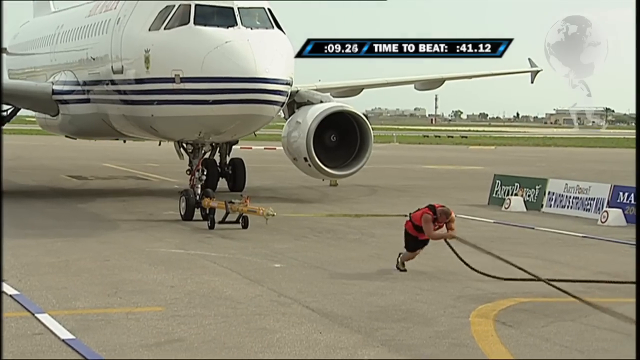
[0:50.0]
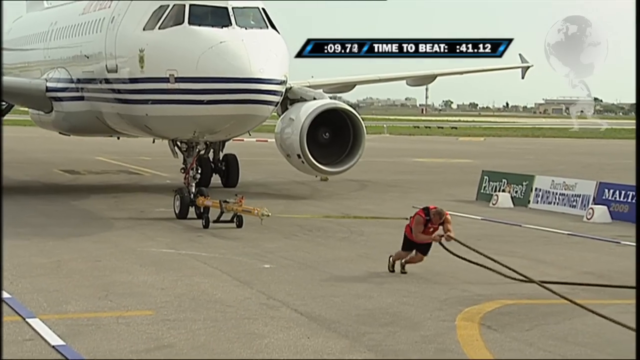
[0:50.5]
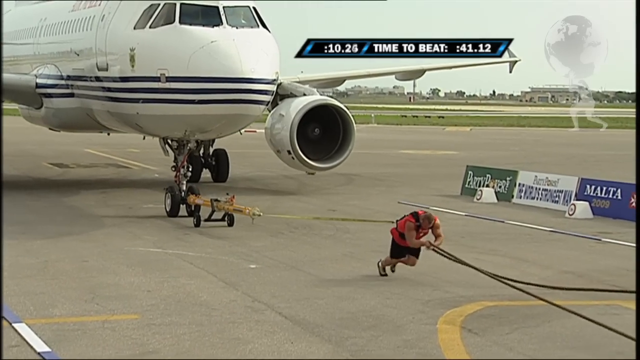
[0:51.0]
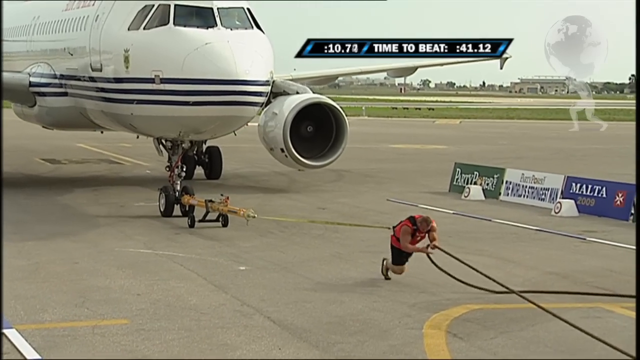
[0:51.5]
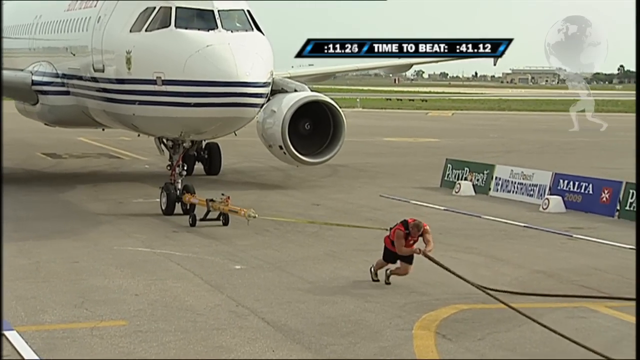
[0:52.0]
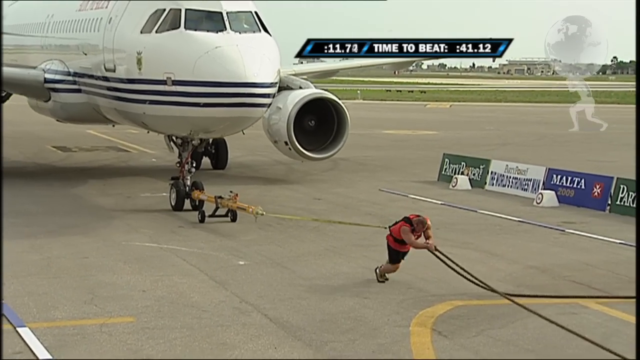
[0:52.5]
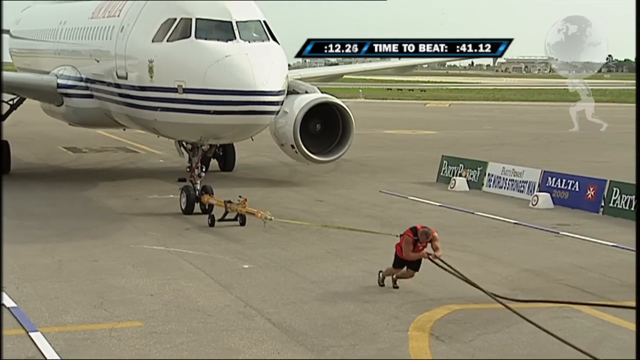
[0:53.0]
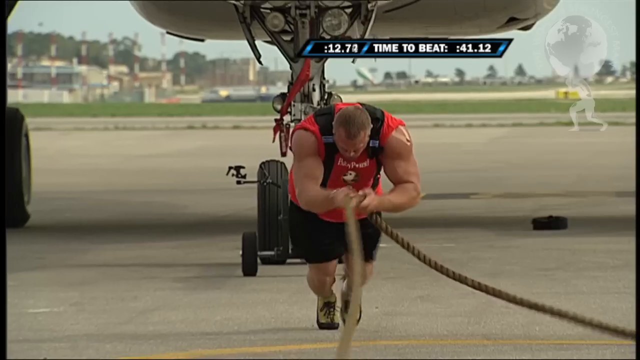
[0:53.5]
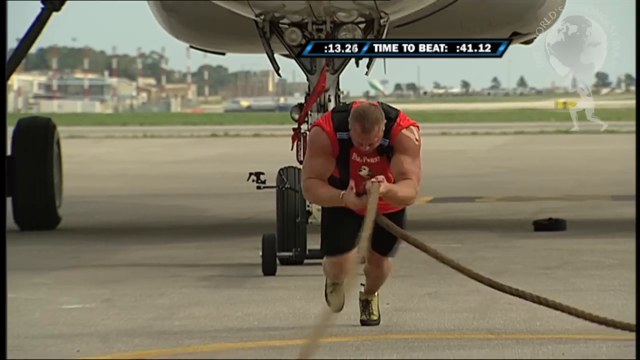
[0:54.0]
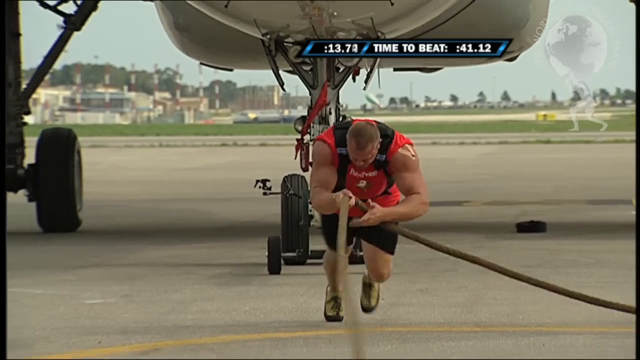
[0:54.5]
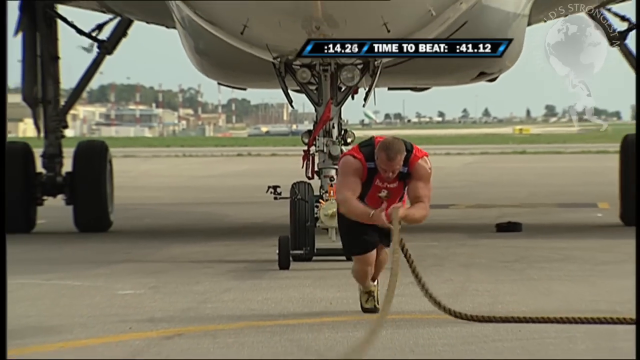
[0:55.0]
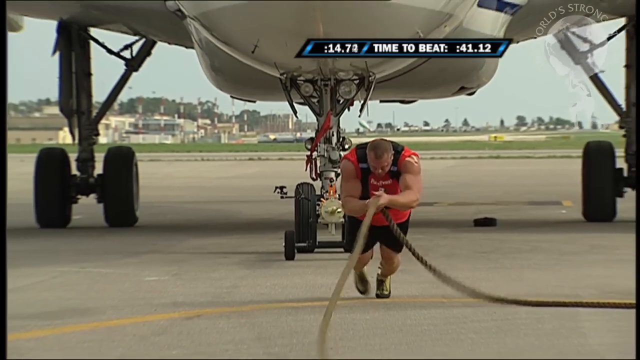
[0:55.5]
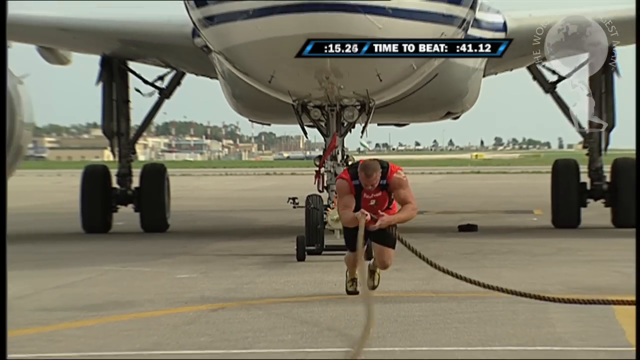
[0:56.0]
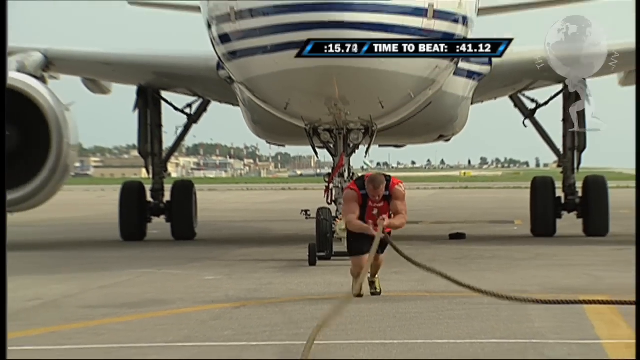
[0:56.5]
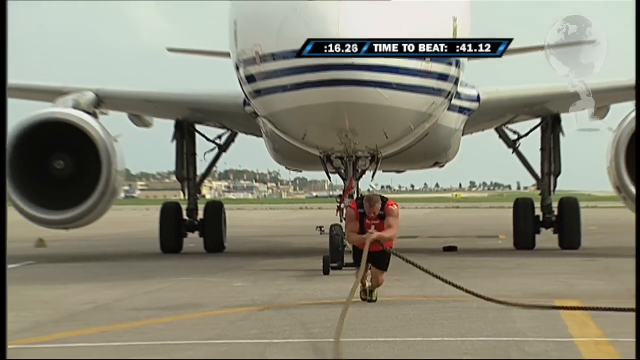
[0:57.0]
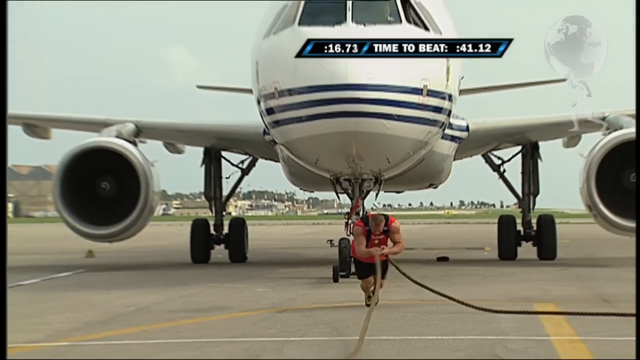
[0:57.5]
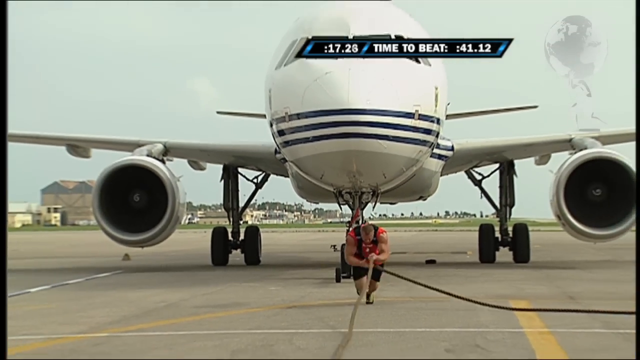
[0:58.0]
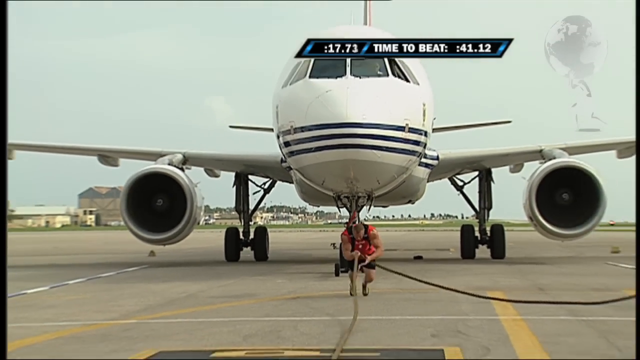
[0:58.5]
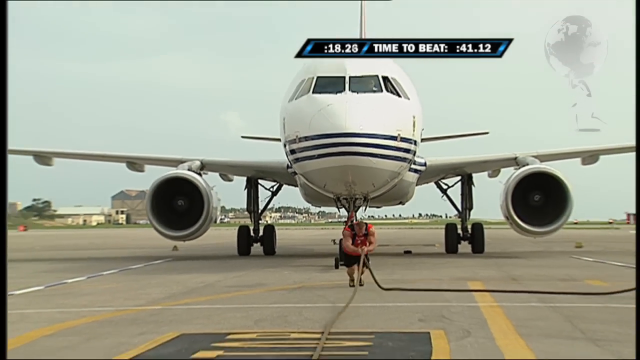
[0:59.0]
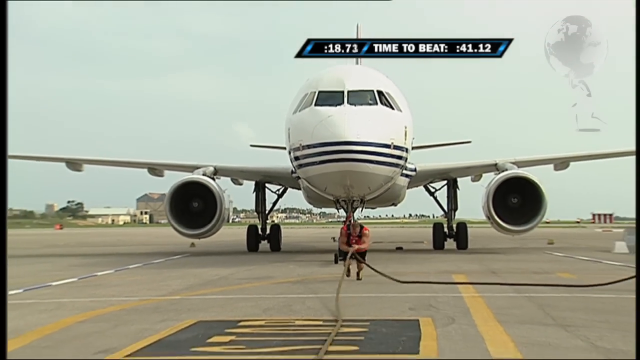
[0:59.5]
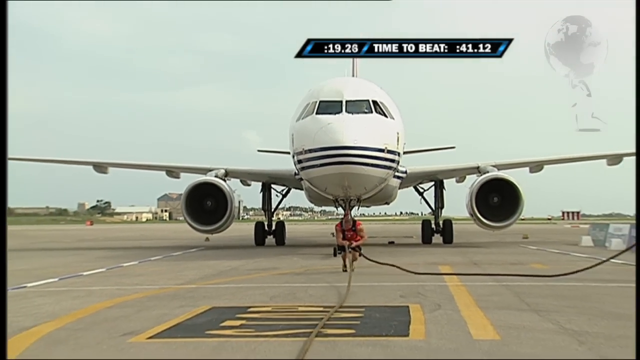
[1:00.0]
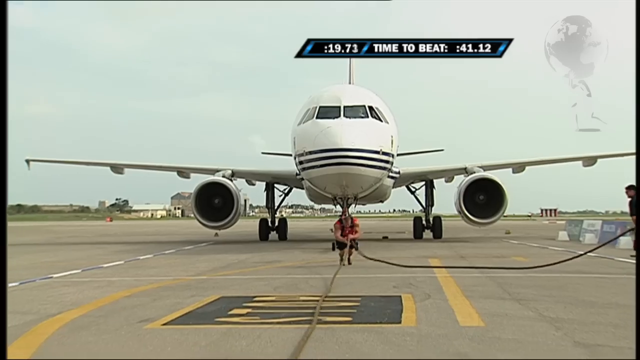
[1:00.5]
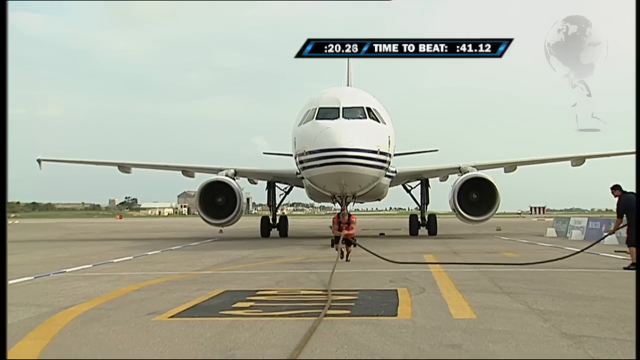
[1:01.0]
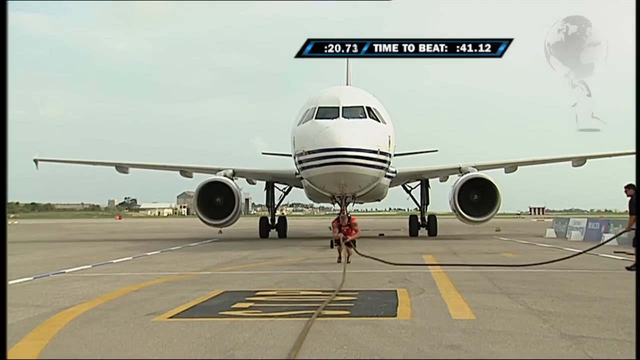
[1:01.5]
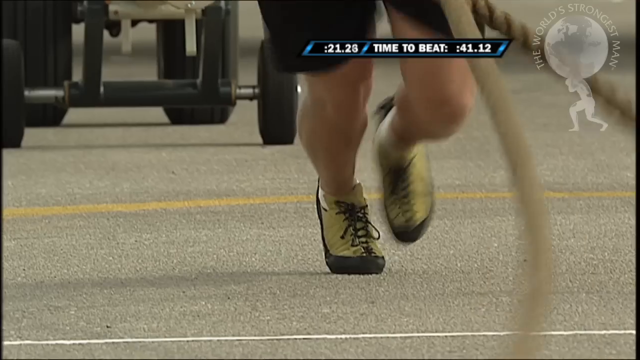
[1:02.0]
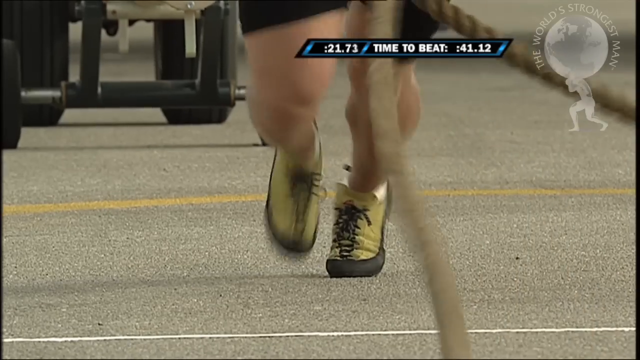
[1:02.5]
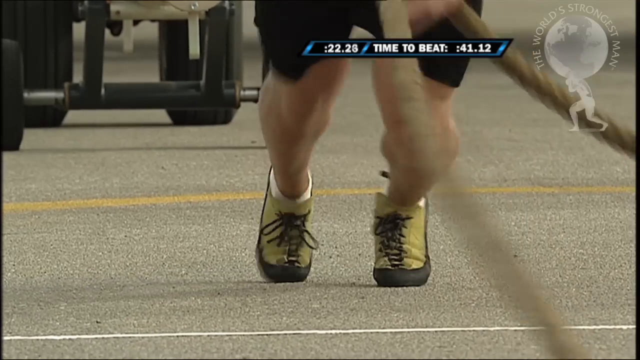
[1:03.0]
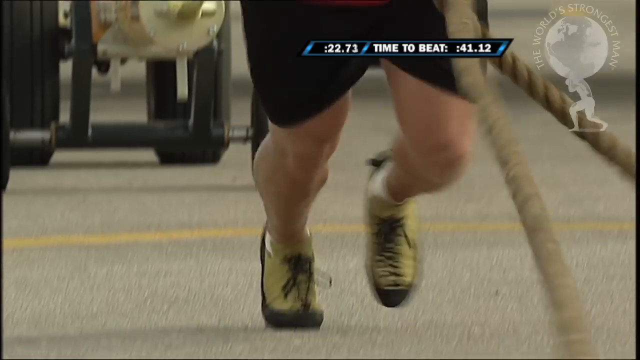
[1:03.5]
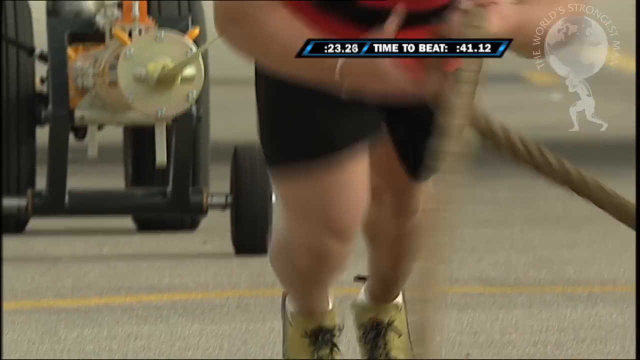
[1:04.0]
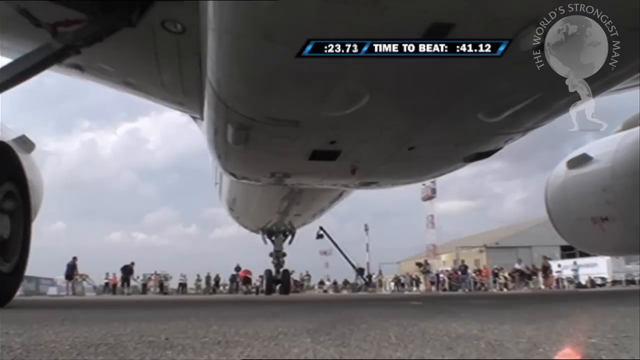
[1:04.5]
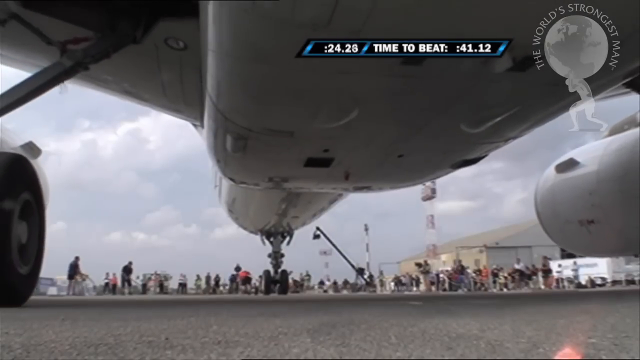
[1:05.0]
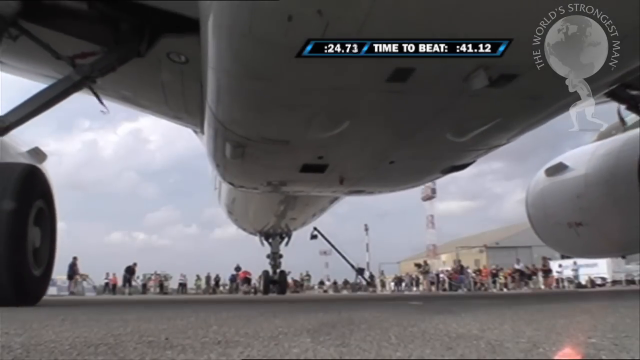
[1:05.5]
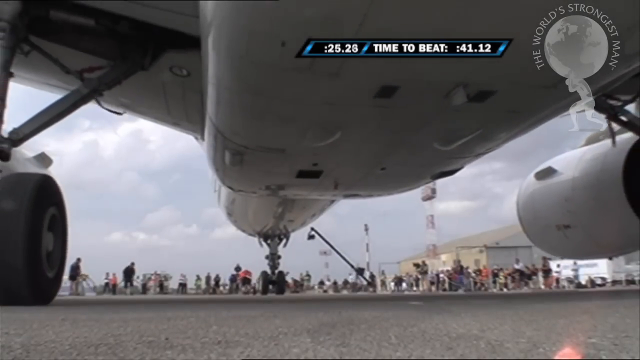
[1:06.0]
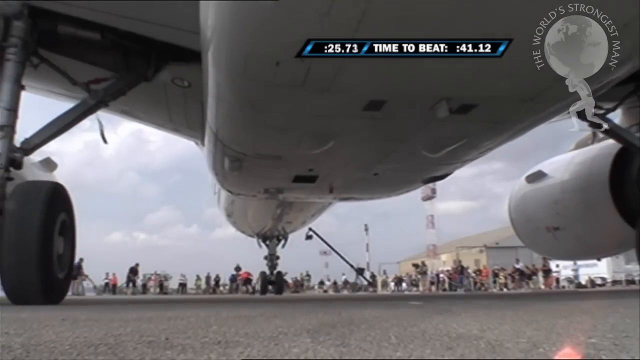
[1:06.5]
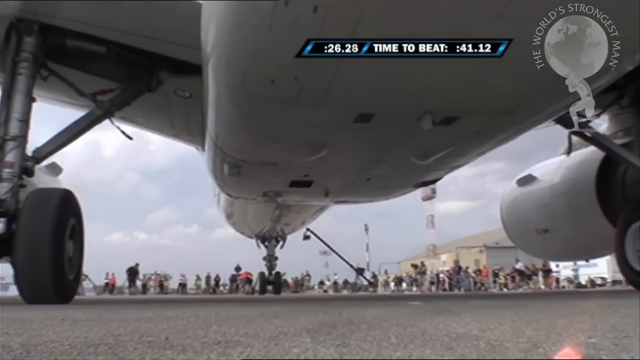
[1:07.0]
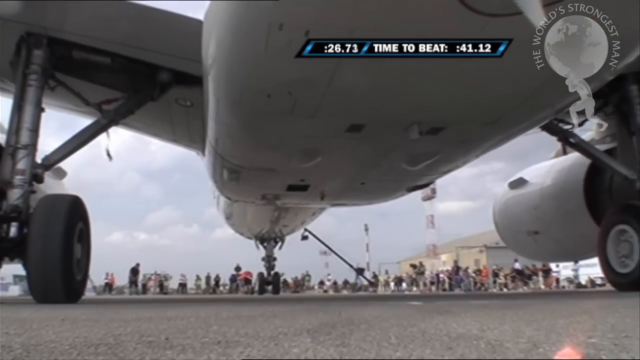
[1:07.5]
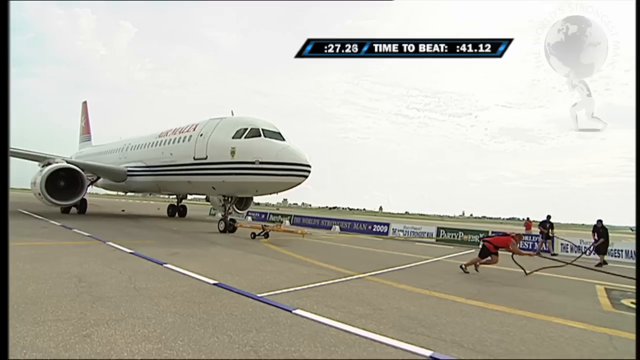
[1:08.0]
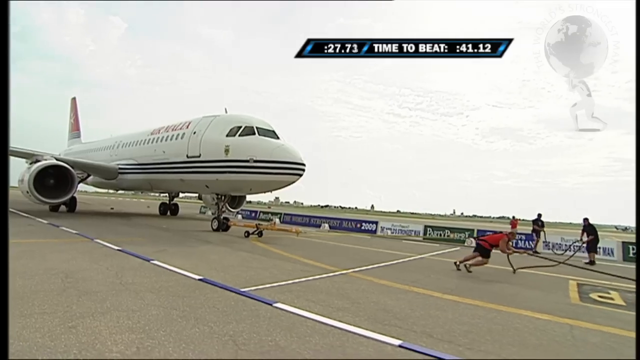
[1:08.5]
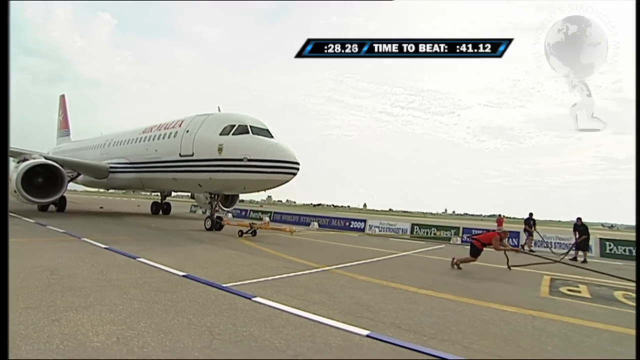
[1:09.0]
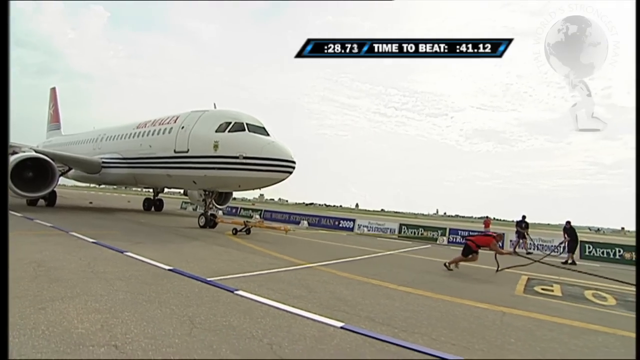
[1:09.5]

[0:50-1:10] Travis Ortmeier competes in the Plane Pull event of the World's Strongest Man competition. A World's Strongest Man logo watermark, a muscular man lifting the entire world above his shoulders, is in the top right corner. The Plane Pull time to beat is 41.12 seconds. A harness is tied around his back, with a rope from it tied around the wheels of the airplane behind him. He holds a rope in front of him to steady himself and slowly walks forward along the runway, each step pulling the 44-ton airplane further down it. The camera cuts to a front view of Ortmeier walking toward the camera, pulling on the rope with the airplane behind him, then to a view from under the plane, and then to a wide shot of him pulling the plane along the runway.